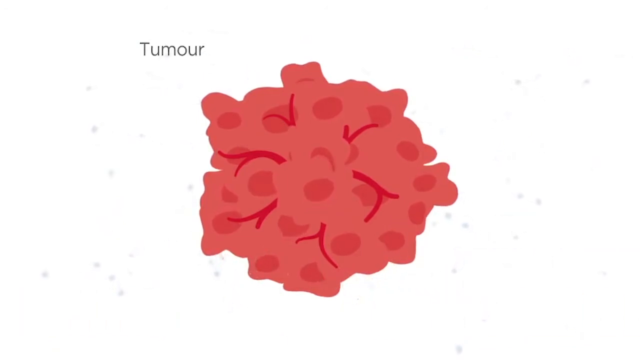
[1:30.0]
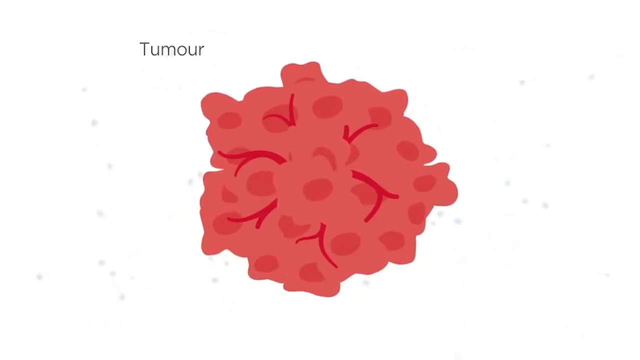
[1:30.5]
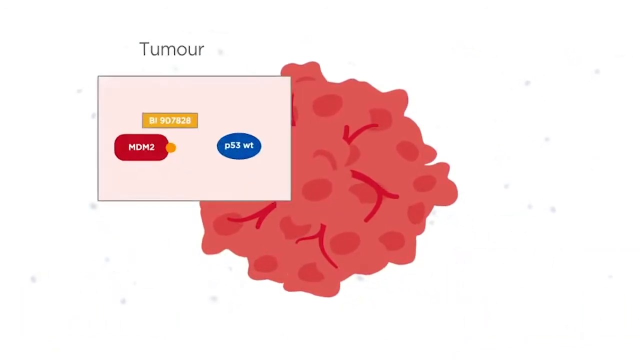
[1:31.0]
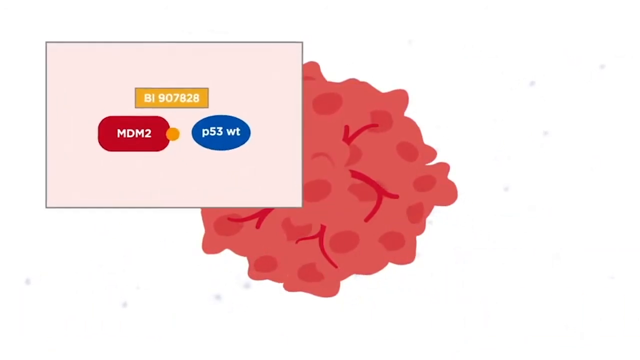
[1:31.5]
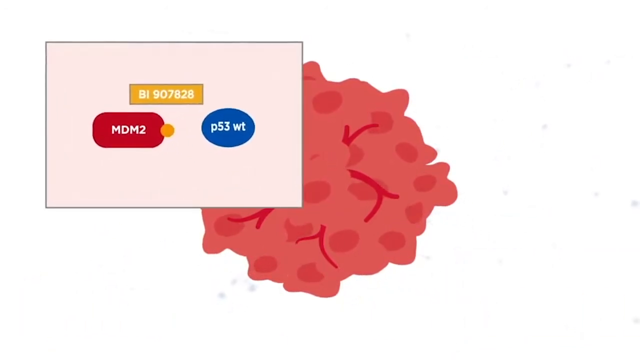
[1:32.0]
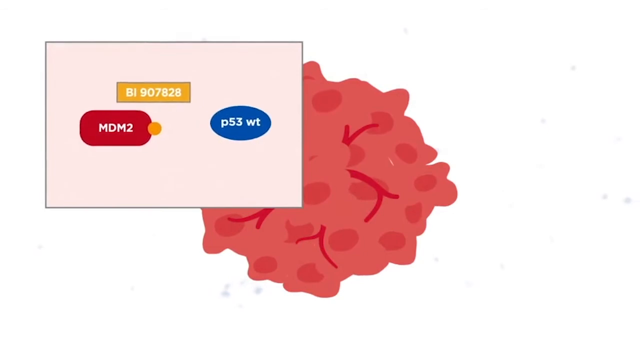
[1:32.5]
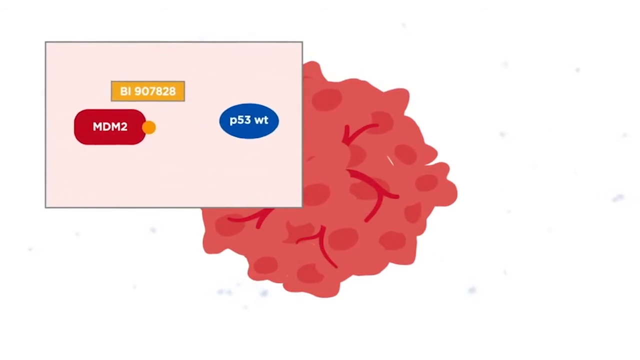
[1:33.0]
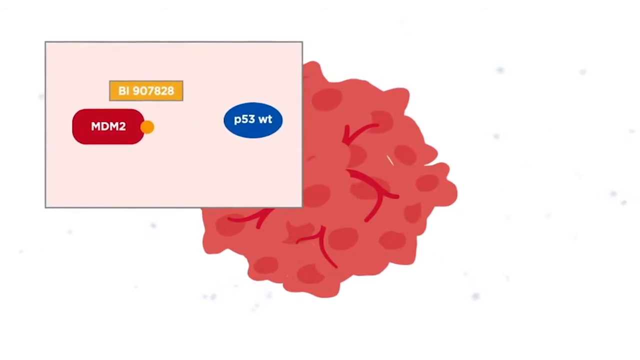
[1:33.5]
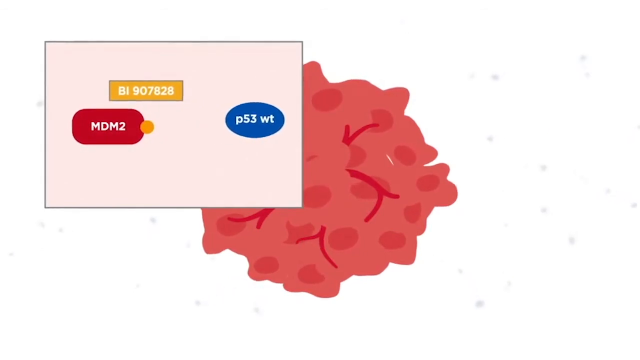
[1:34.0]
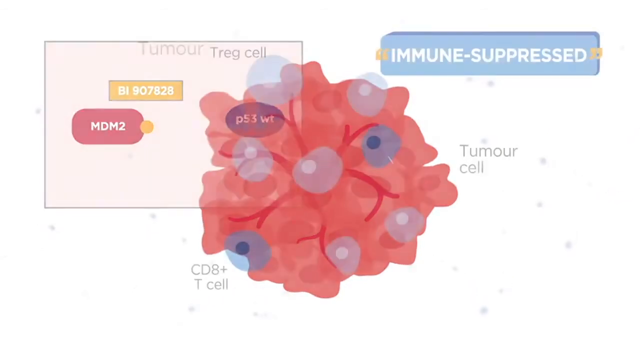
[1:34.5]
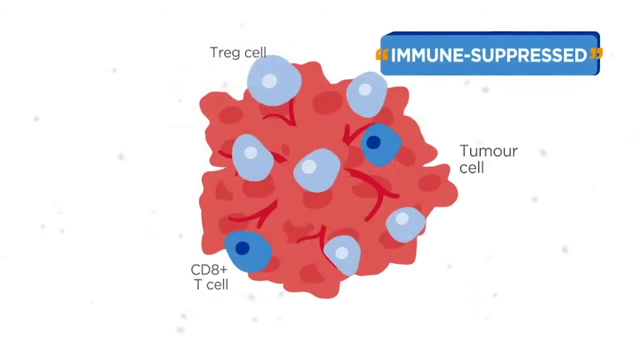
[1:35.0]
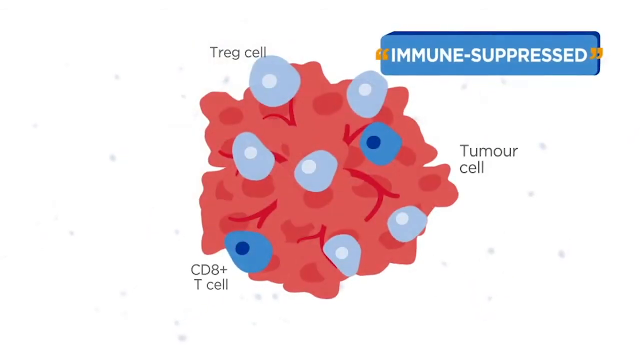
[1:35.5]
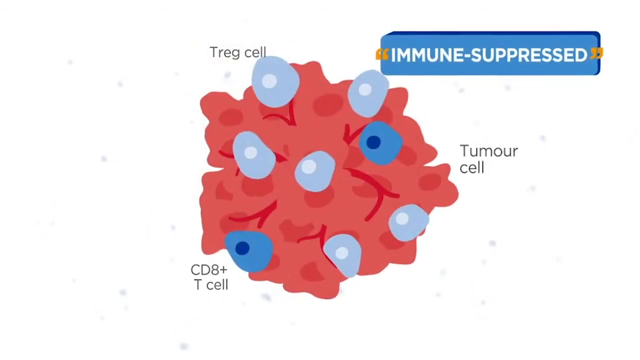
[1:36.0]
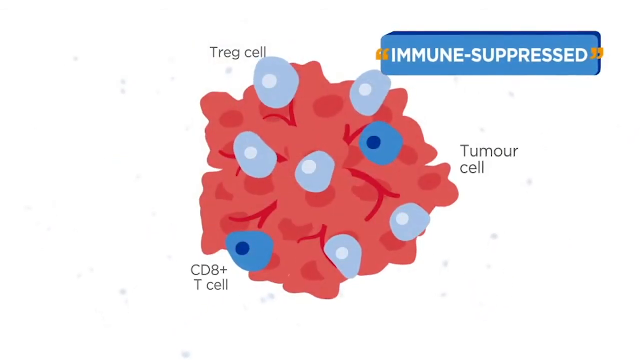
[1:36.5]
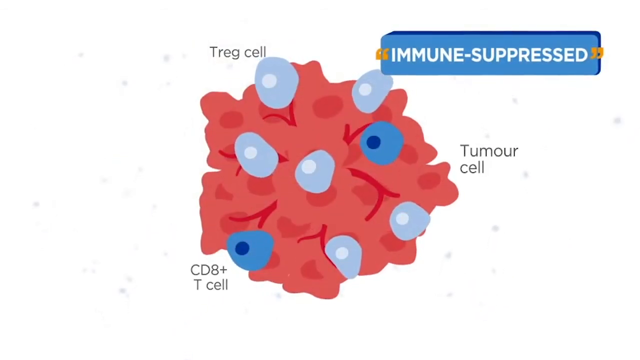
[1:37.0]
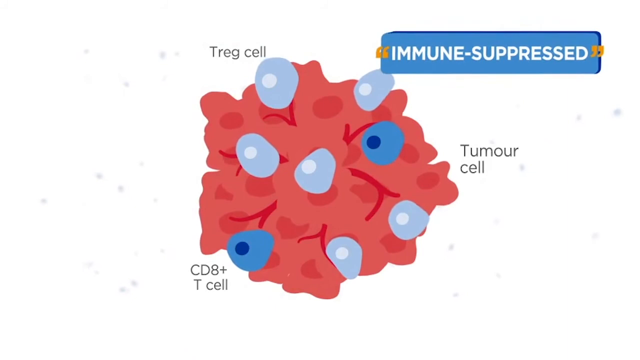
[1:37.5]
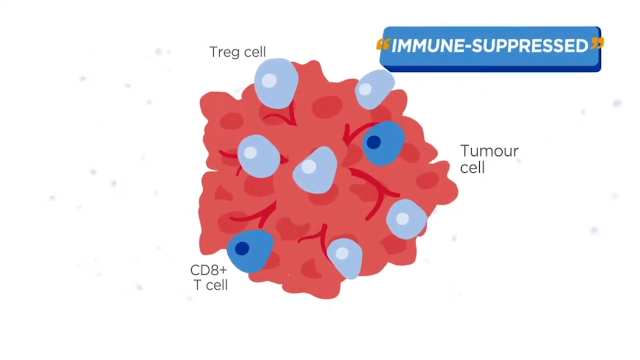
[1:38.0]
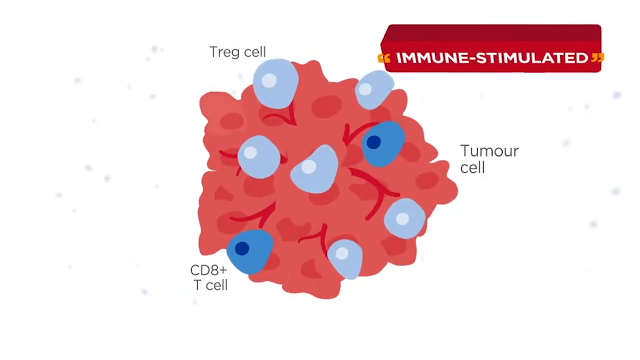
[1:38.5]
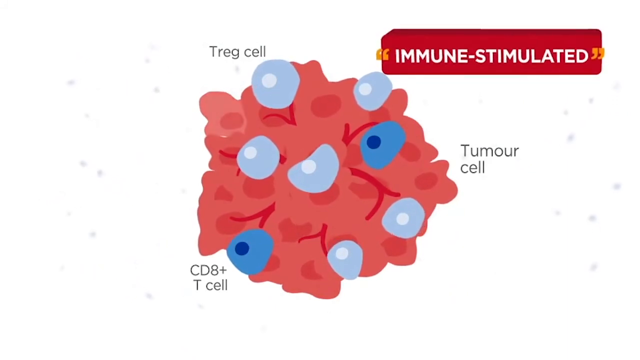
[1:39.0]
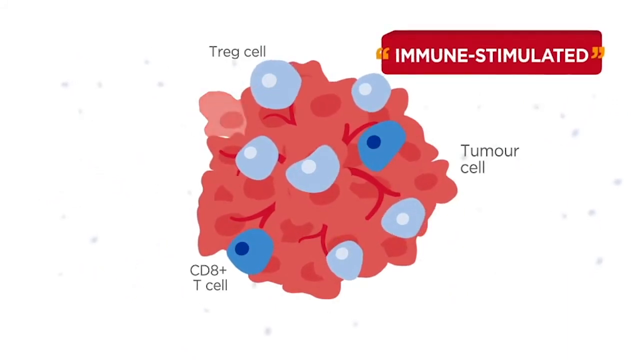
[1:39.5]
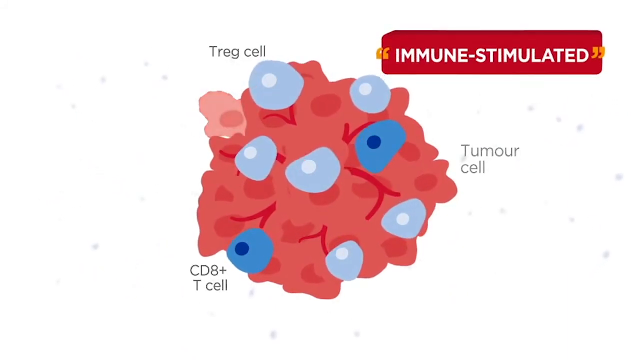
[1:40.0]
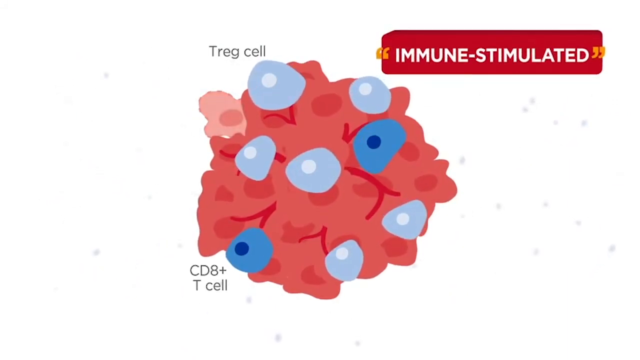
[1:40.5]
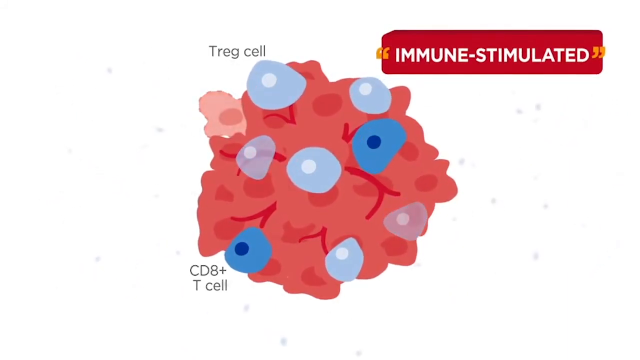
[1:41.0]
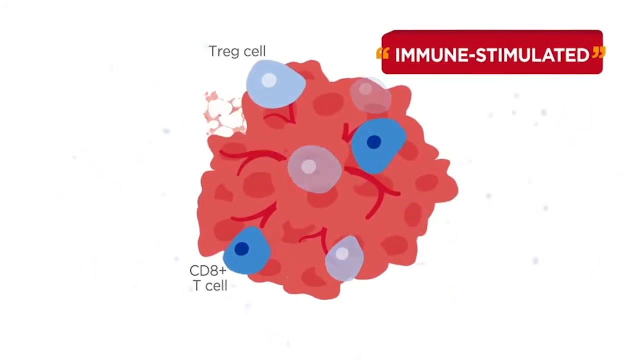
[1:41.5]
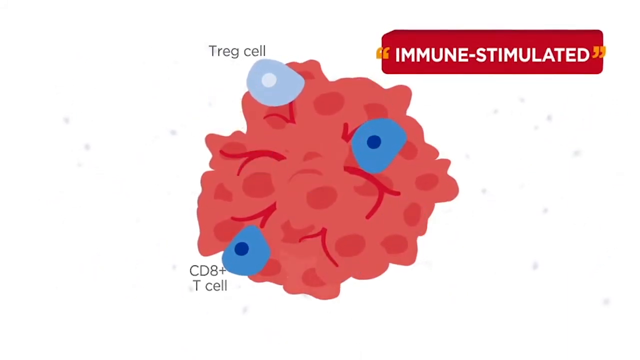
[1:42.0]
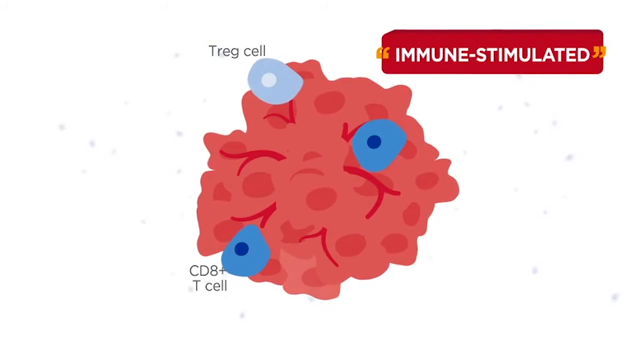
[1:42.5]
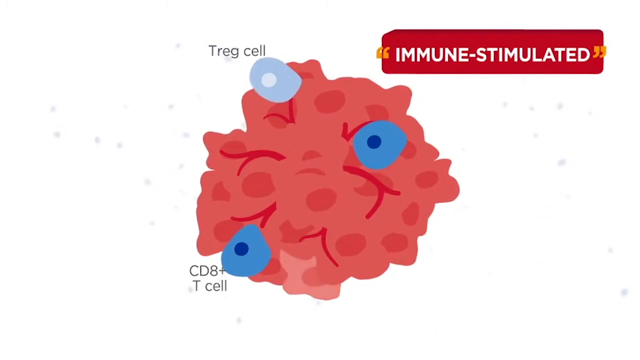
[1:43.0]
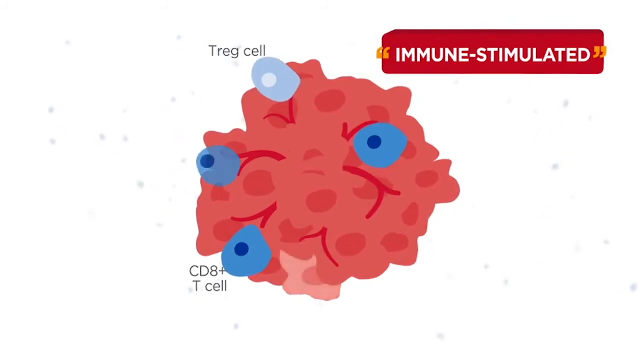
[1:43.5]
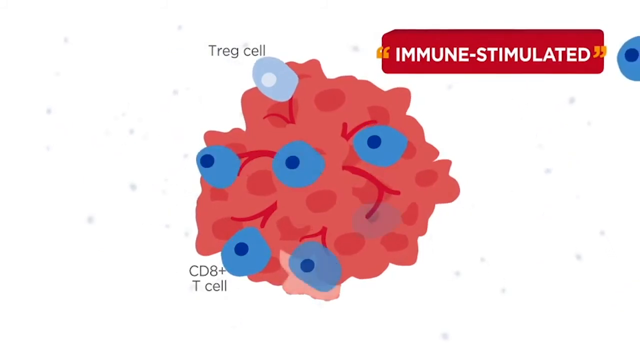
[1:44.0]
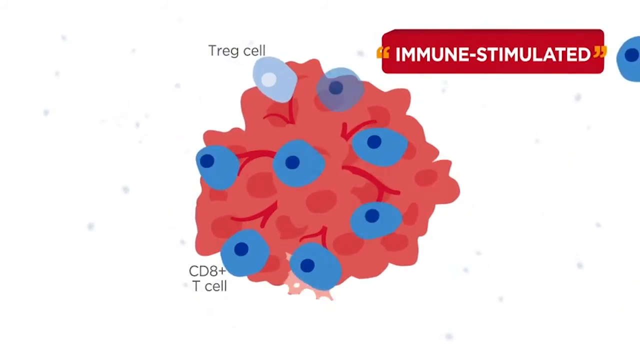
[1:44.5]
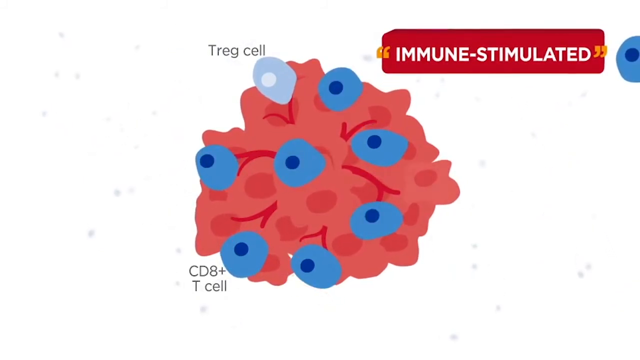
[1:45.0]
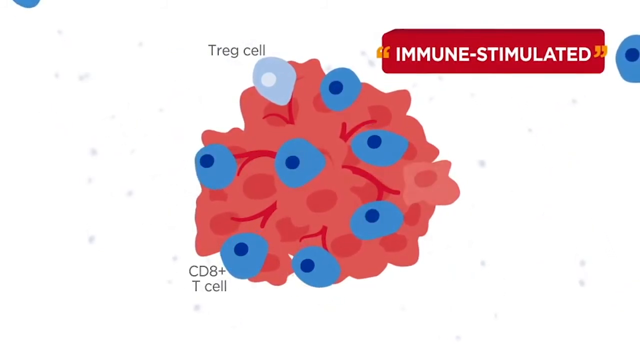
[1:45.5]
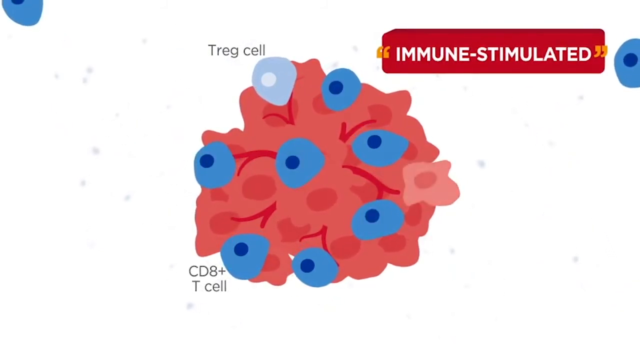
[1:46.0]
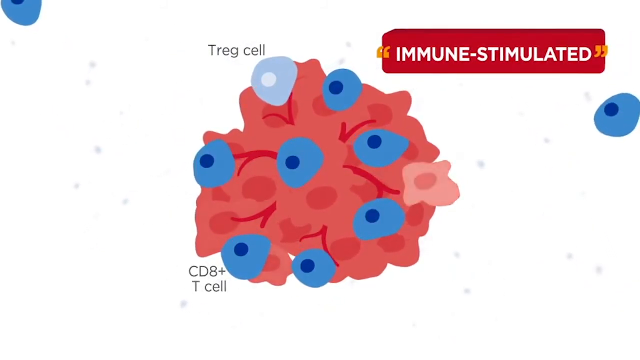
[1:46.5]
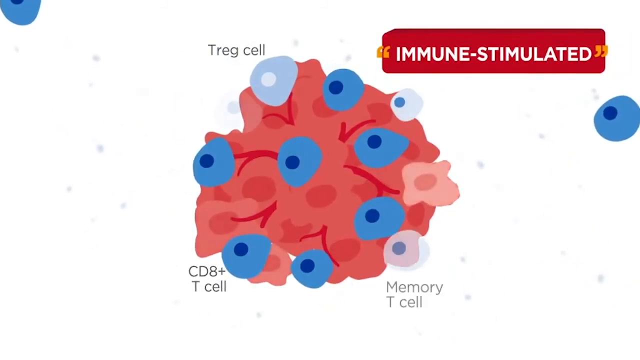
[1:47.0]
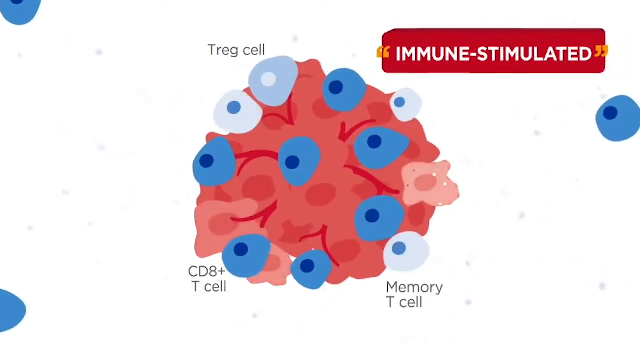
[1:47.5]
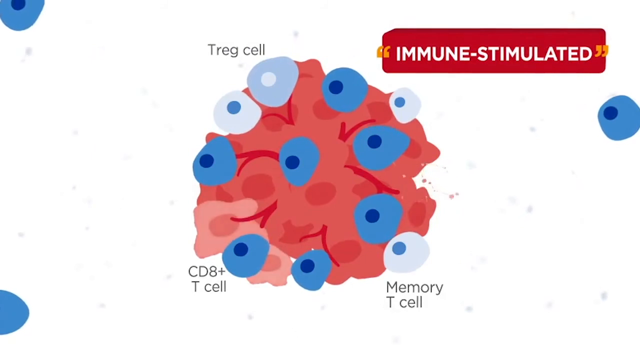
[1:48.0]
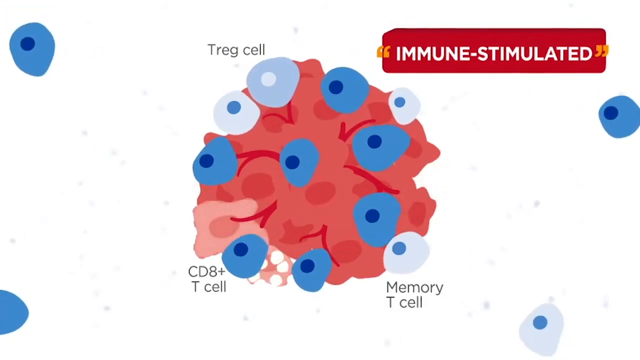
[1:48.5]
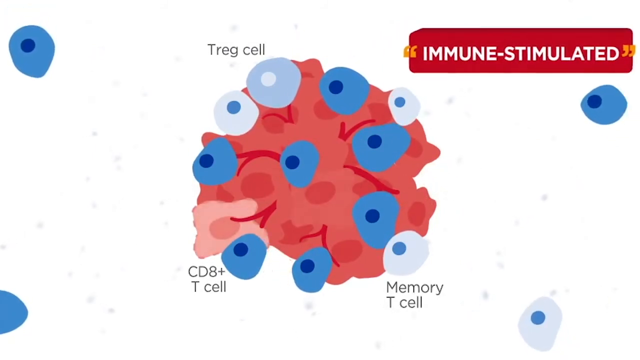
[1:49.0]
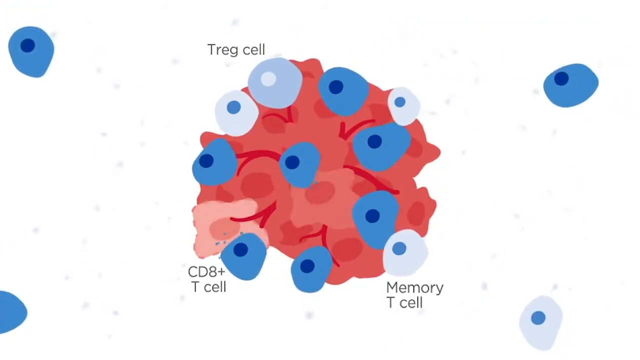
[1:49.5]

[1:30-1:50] A cancerous tumor cell is shown with a pop-up box containing MDM2 in a red oval. Attached to MDM2 is a small mustard-colored dot, labeled above in a mustard-colored rectangle, and there is a small oval that reads "P53WT". An "immune suppressed" sign appears, followed by text reading "immune stimulated"; the box kind of flips and turns around. Inside the tumor cell are CD8 plus T cells and Treg cells. They start to disappear, then reappear, change and multiply, and then the tumor is shown without any of them. The darker blue cells tend to multiply, while only one lighter blue cell remains in the tumor in the end.